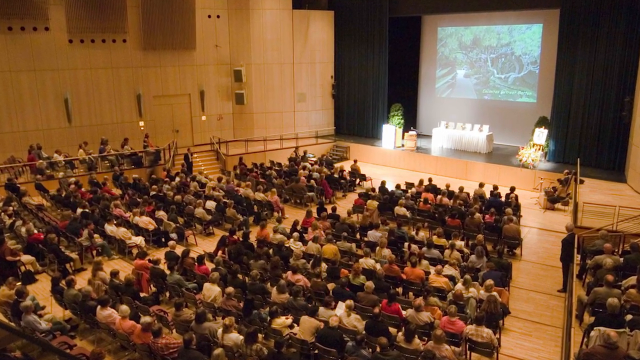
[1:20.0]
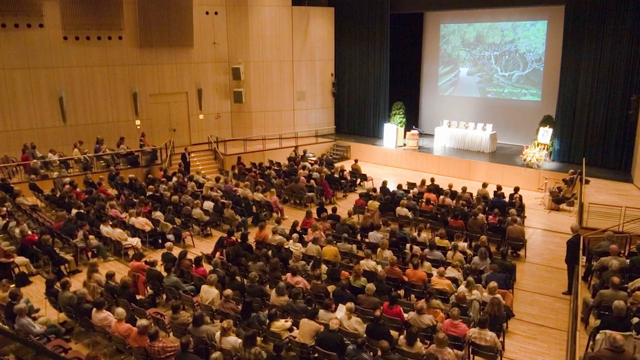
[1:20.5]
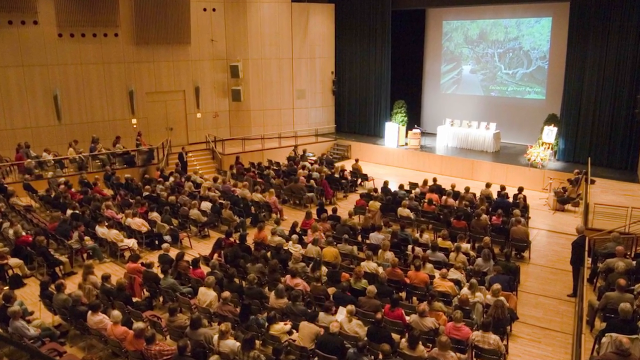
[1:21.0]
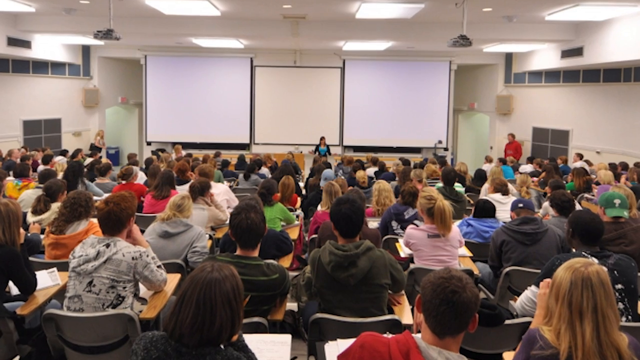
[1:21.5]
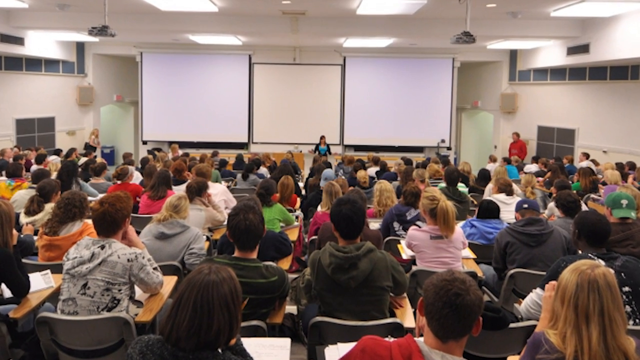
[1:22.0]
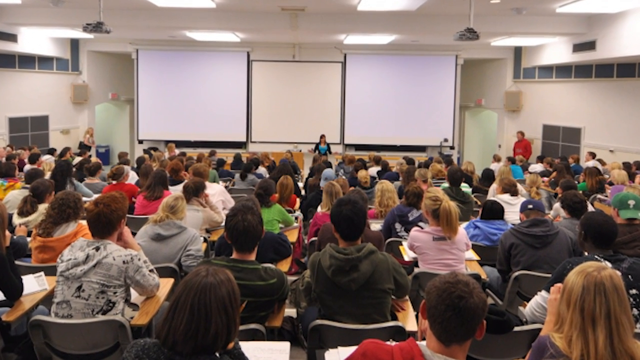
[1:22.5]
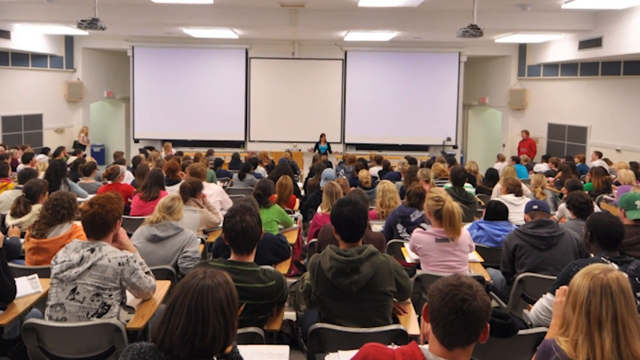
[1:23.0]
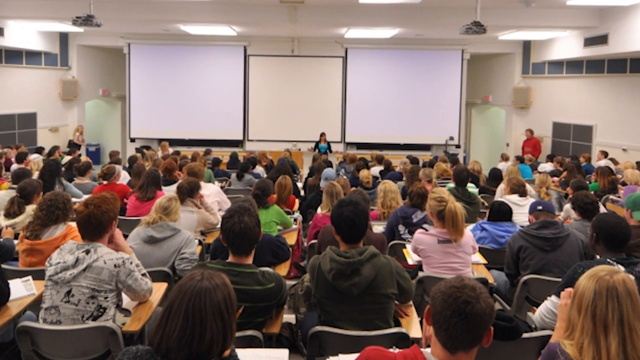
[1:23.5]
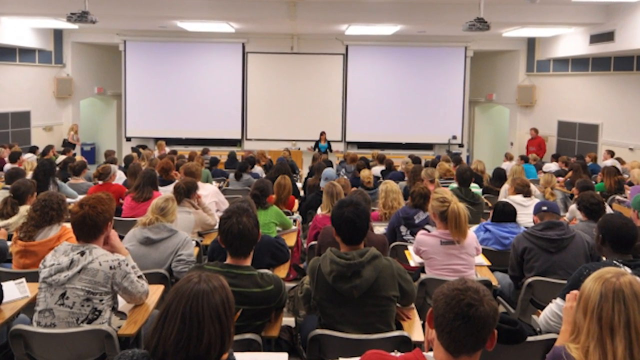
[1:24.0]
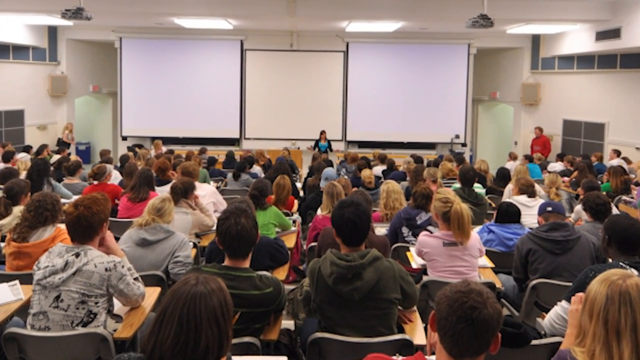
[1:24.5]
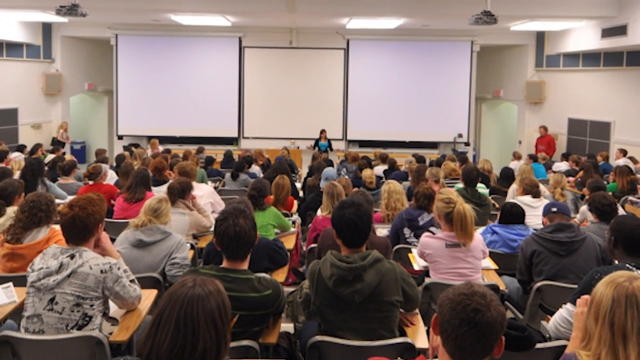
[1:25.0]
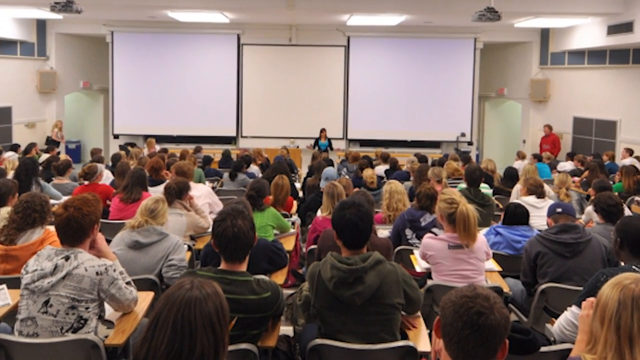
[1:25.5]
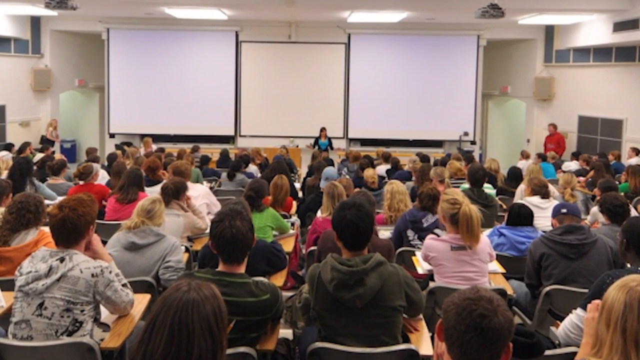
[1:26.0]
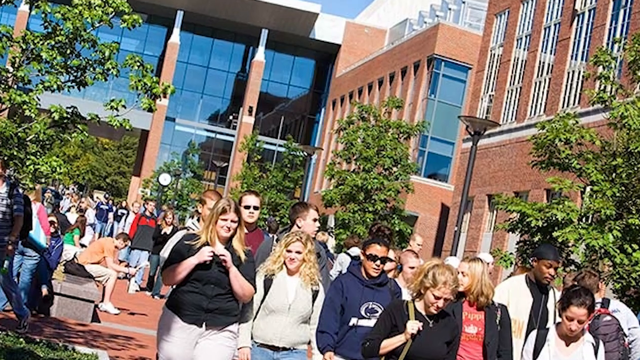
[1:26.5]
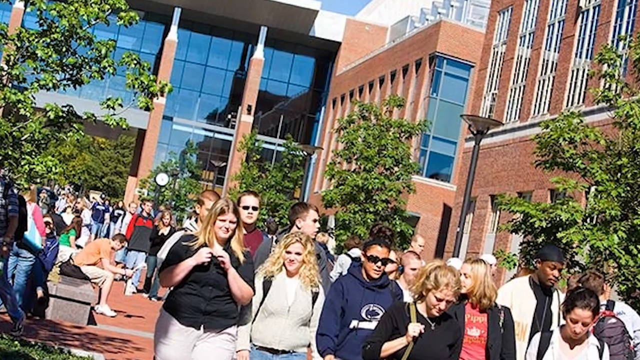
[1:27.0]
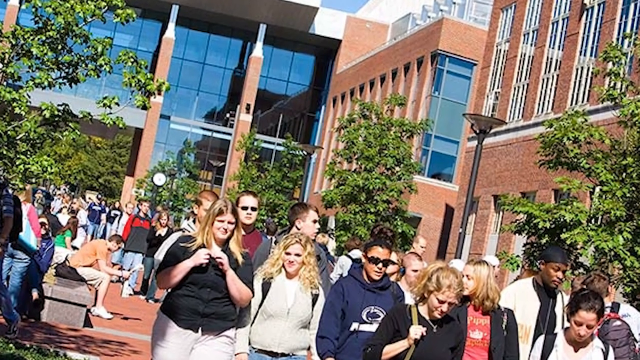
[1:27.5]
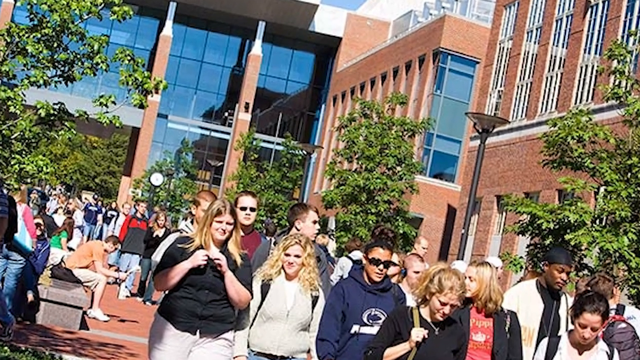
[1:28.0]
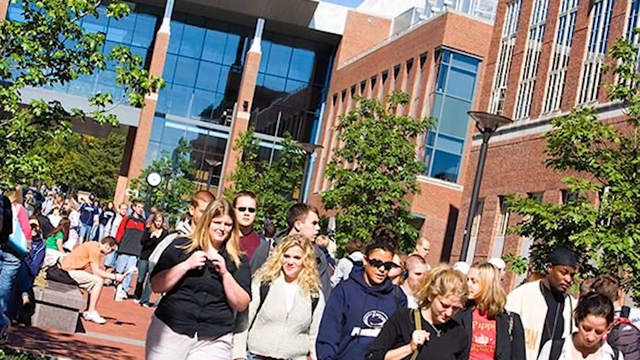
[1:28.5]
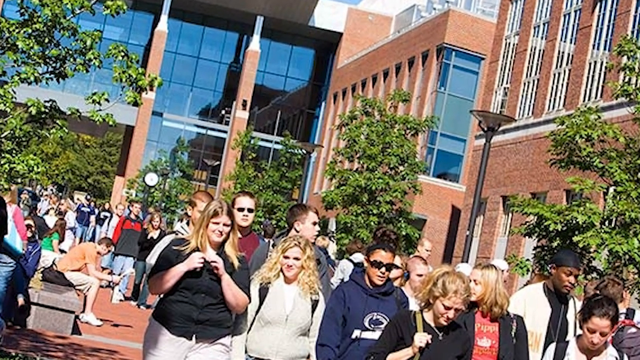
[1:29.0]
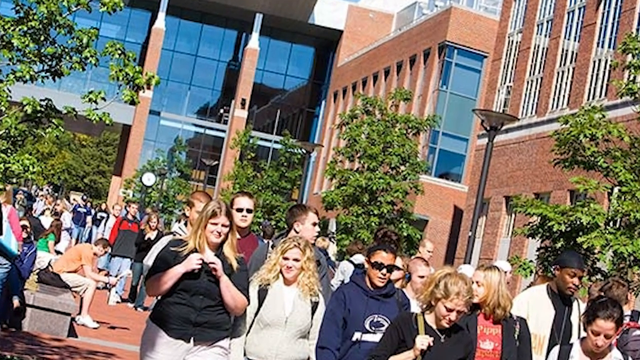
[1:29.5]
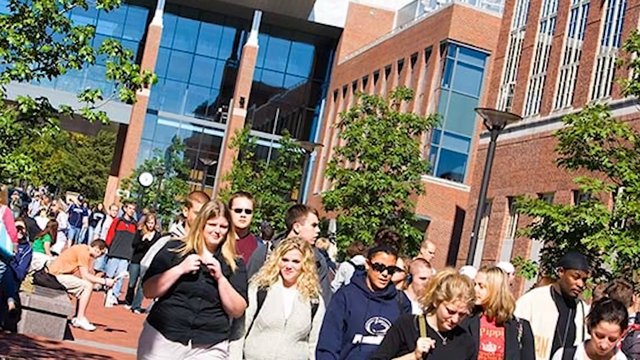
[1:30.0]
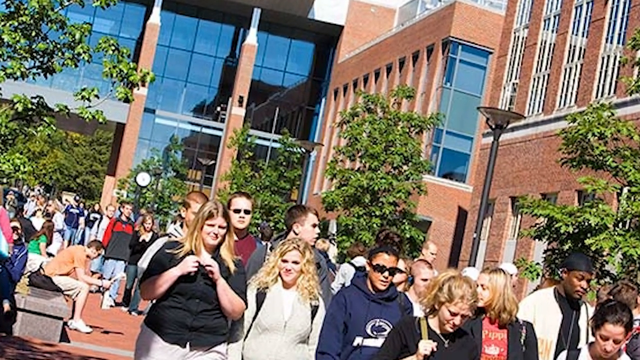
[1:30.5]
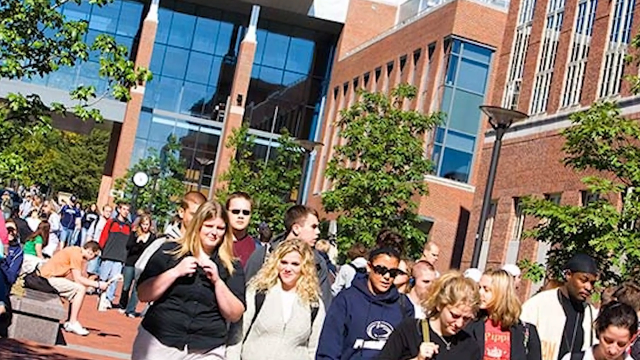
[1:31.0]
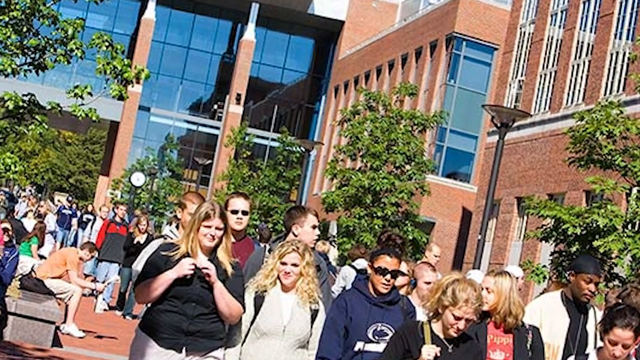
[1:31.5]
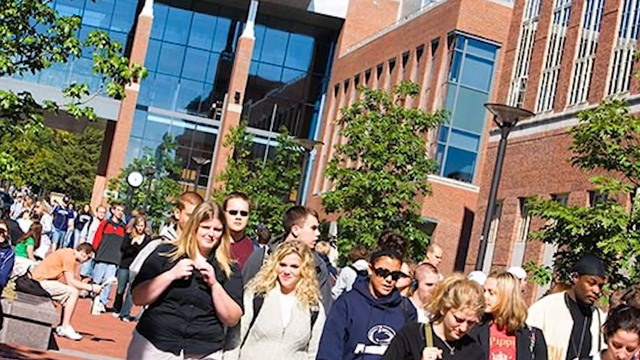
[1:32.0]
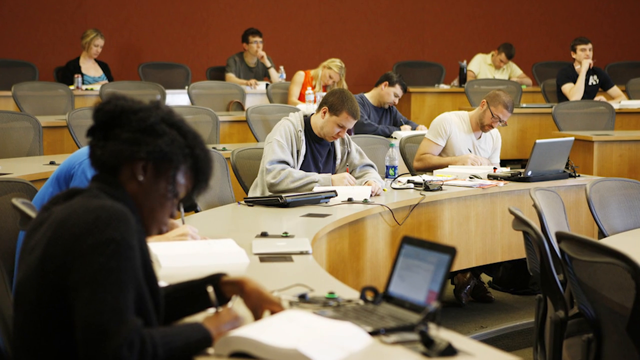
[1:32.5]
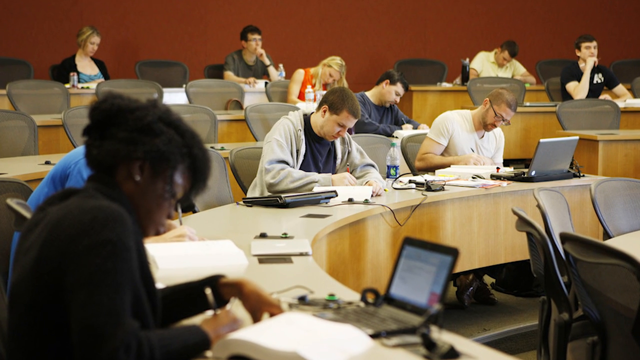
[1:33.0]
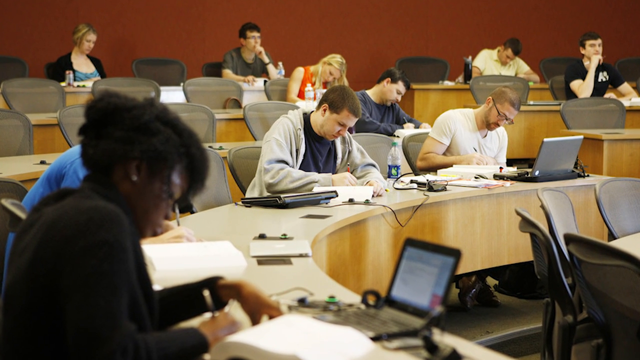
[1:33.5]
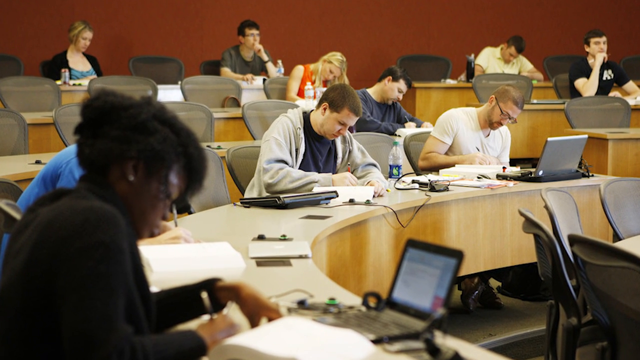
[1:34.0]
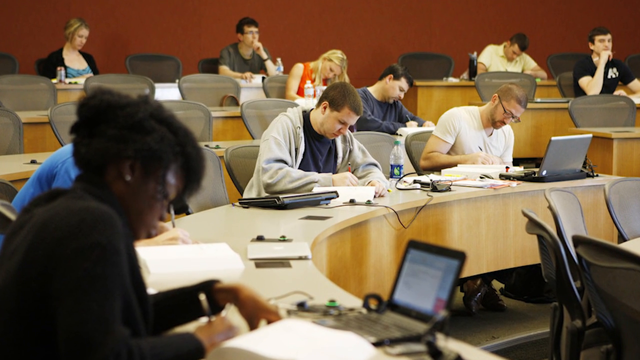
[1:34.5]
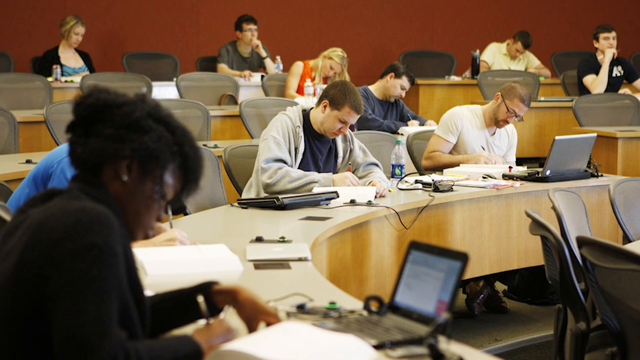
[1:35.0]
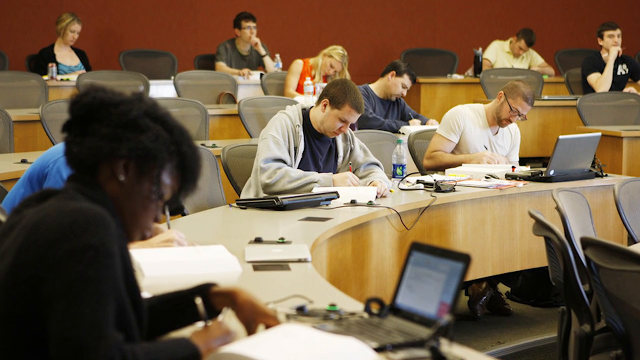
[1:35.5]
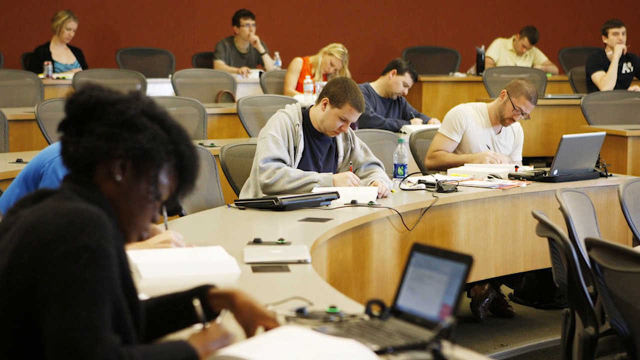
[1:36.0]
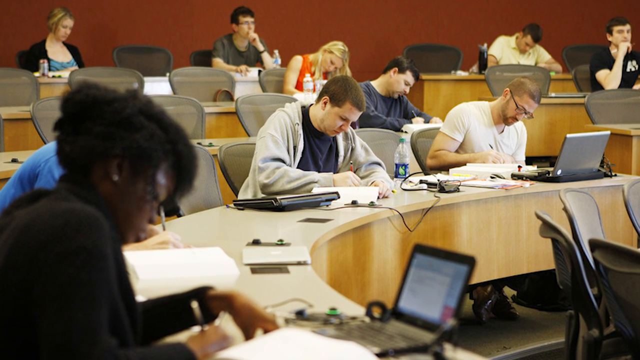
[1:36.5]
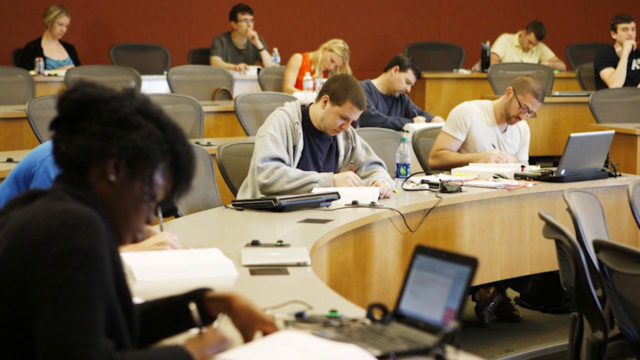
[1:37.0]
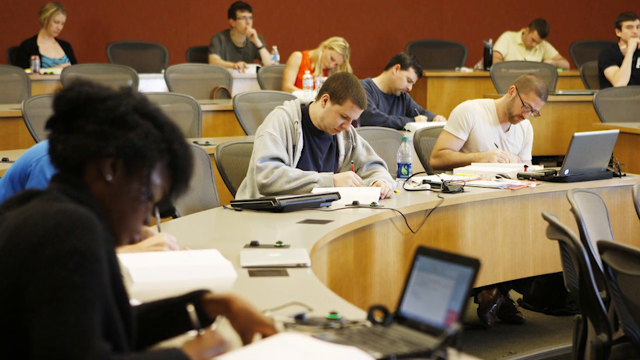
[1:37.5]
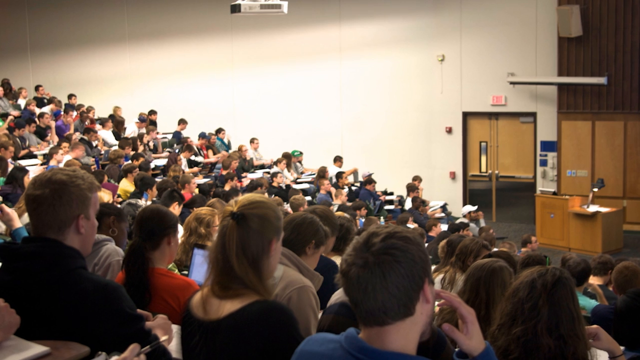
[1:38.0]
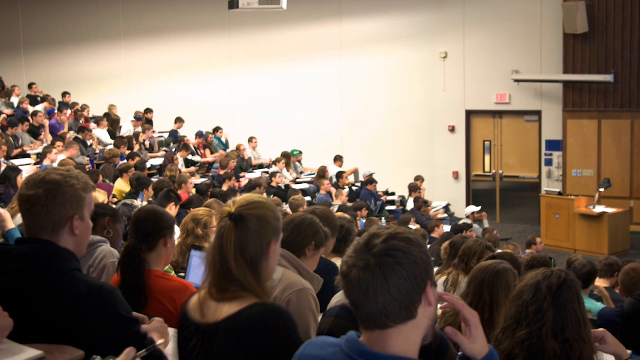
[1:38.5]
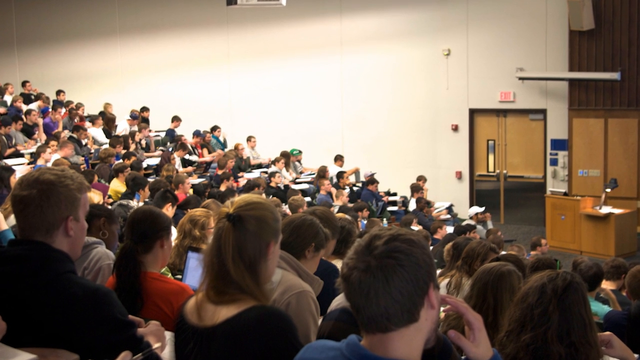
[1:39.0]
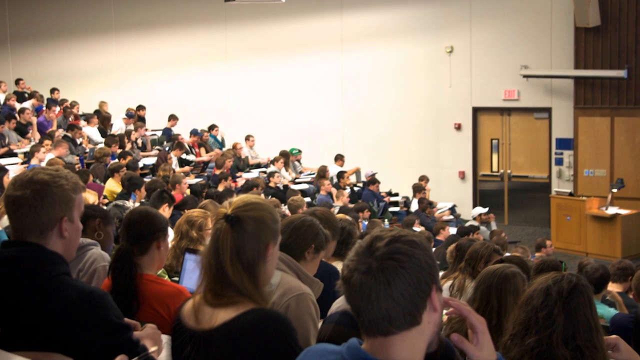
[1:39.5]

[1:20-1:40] Many students are gathered in a classroom, with a teacher standing in front of them; the students all face the front and are seen only from behind. Students are also seen working outside the university, smiling, captured without knowing. Next, in a computer classroom, each student has a computer in front of them; they are busy studying, some writing, with computers and laptops in front of them.